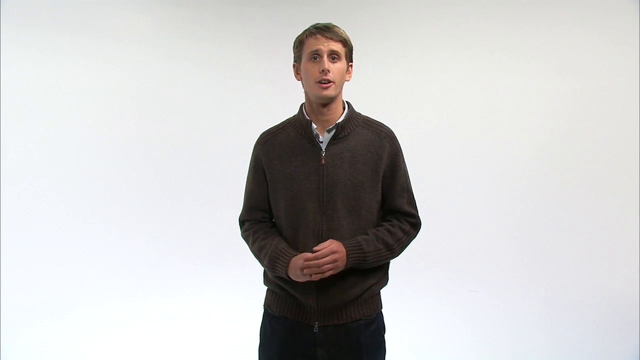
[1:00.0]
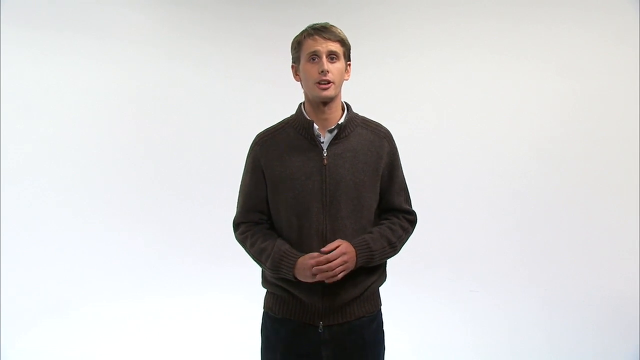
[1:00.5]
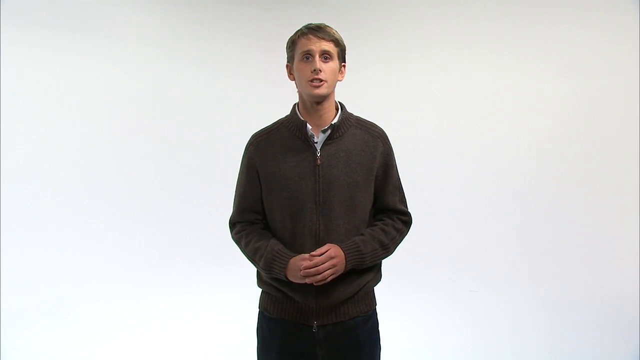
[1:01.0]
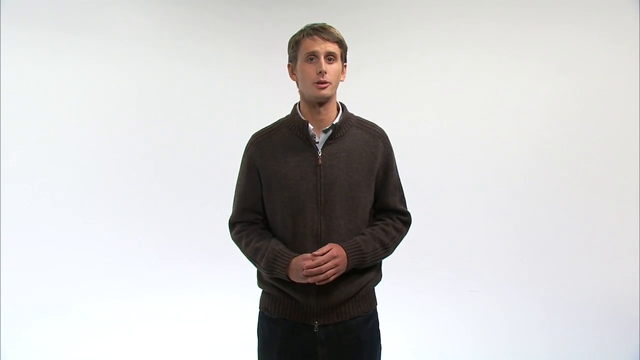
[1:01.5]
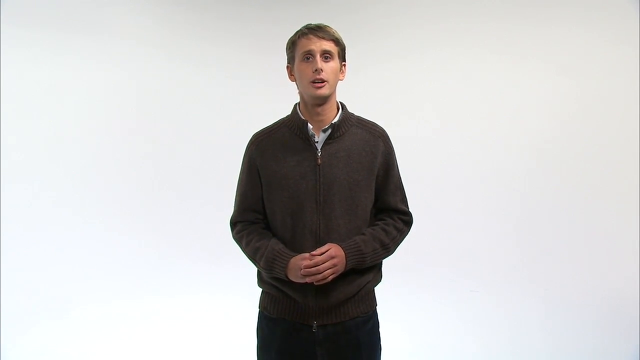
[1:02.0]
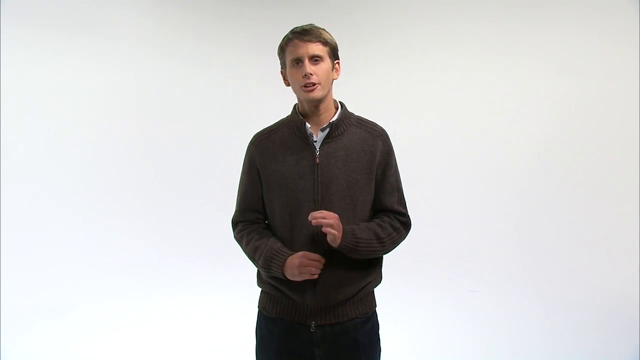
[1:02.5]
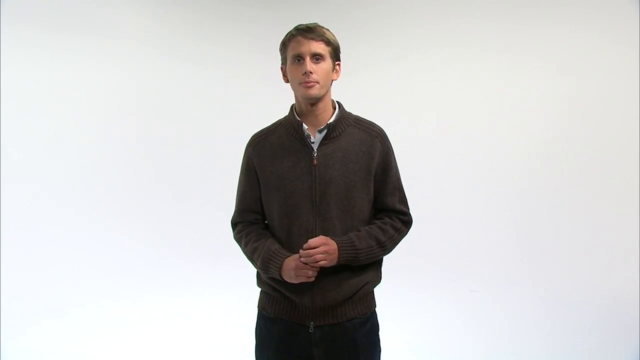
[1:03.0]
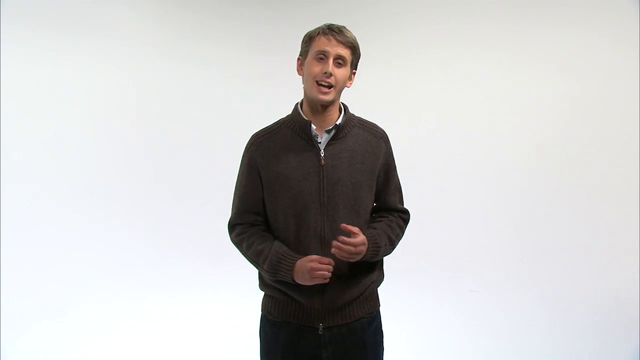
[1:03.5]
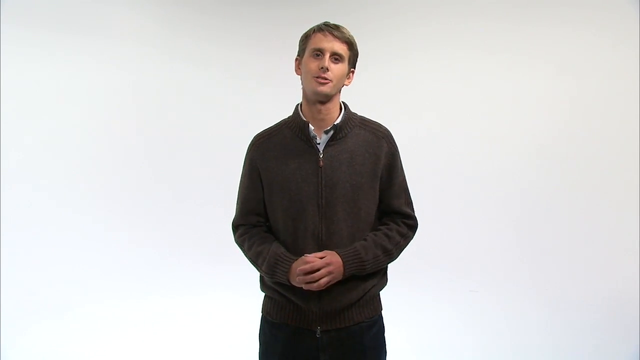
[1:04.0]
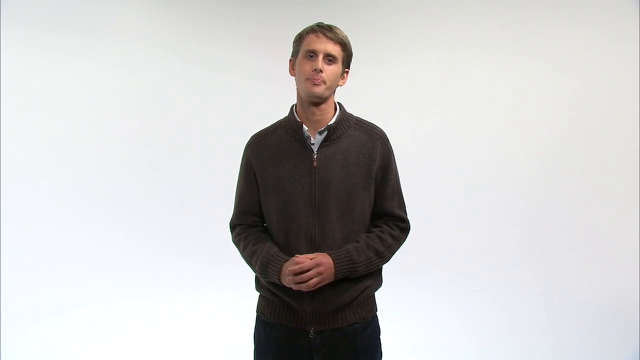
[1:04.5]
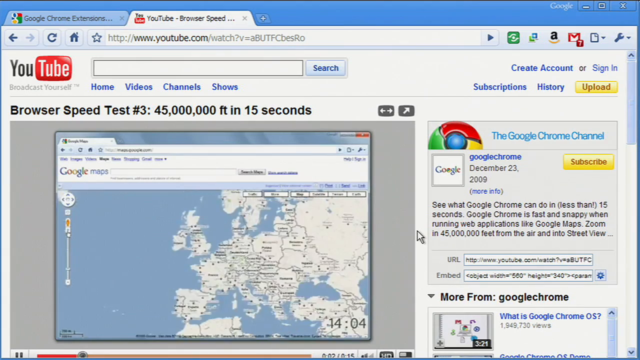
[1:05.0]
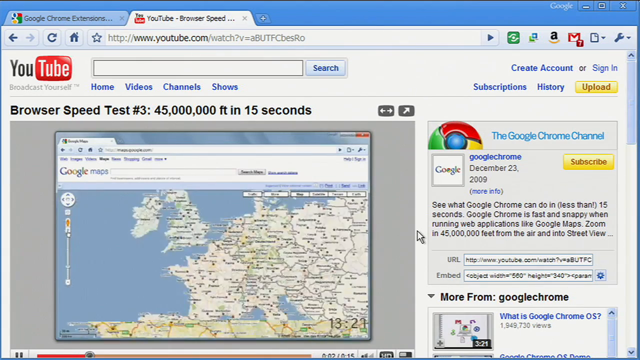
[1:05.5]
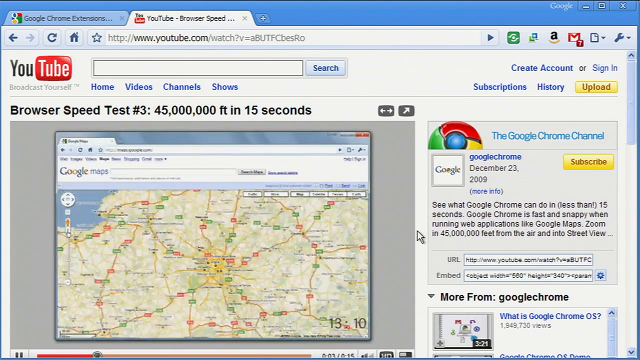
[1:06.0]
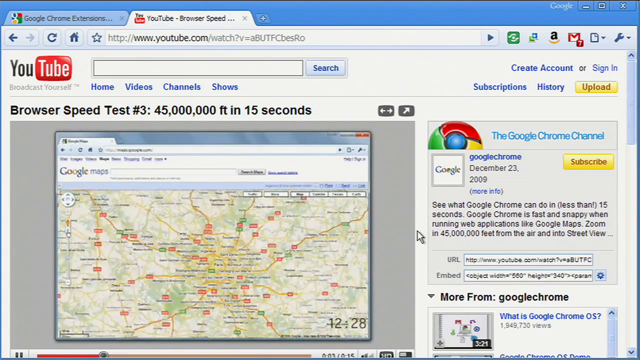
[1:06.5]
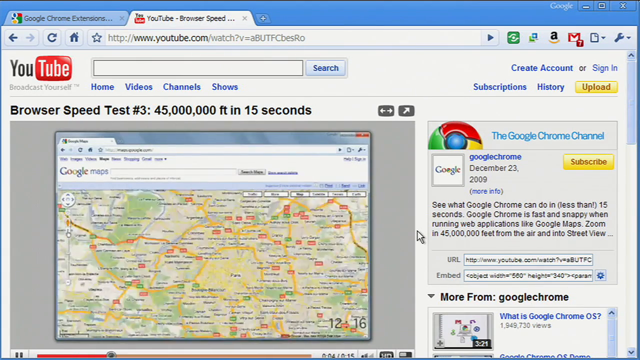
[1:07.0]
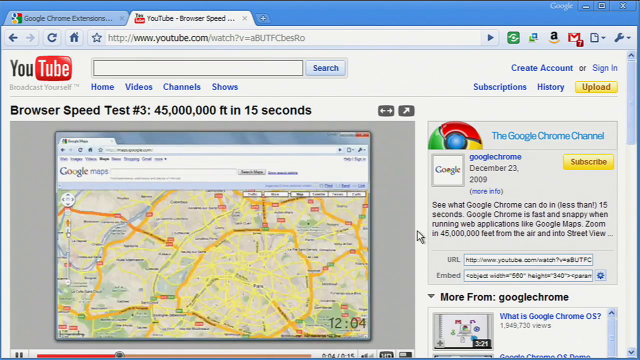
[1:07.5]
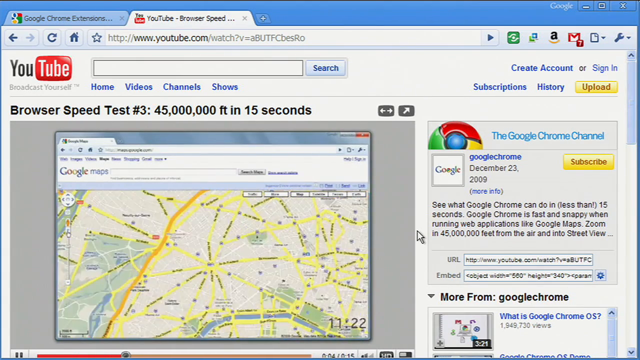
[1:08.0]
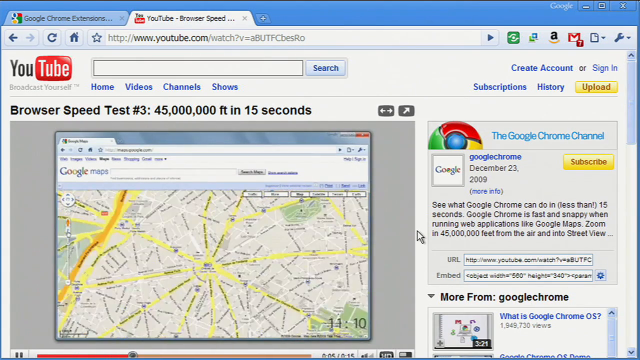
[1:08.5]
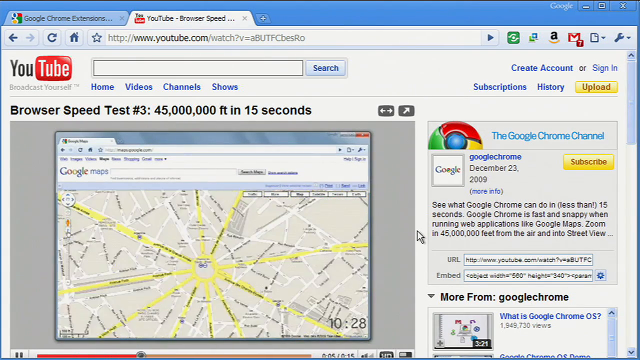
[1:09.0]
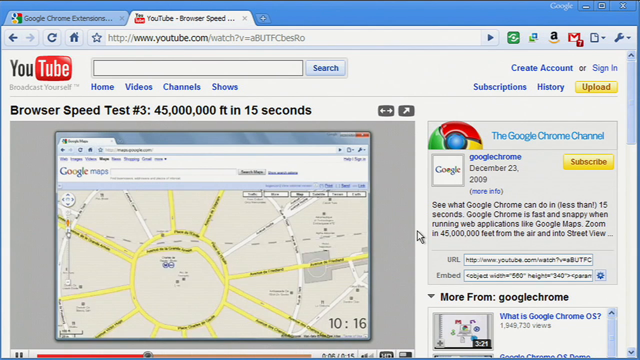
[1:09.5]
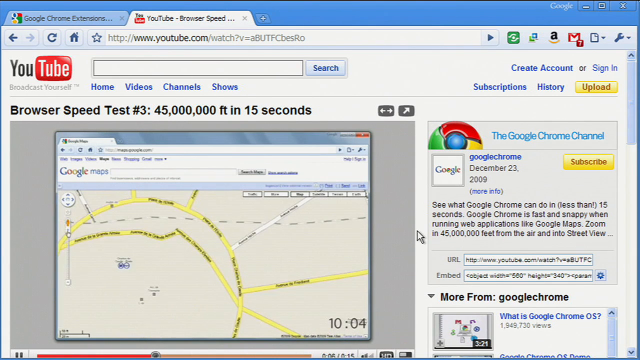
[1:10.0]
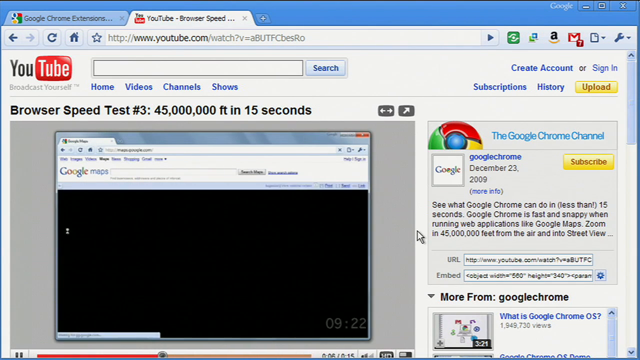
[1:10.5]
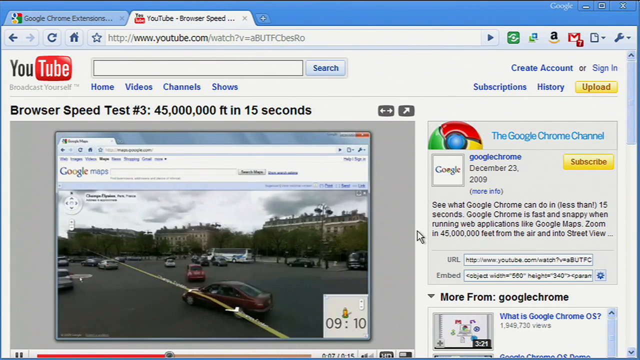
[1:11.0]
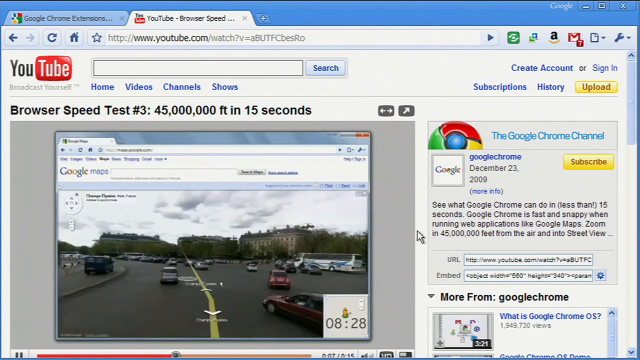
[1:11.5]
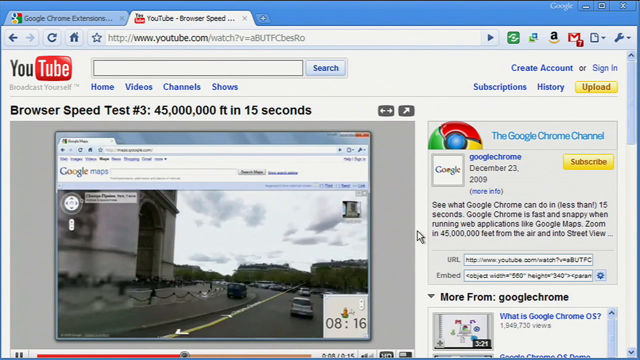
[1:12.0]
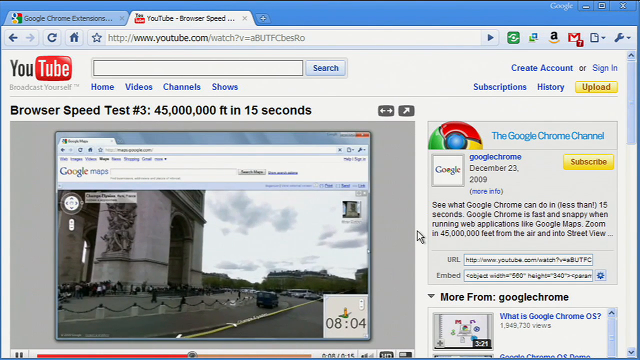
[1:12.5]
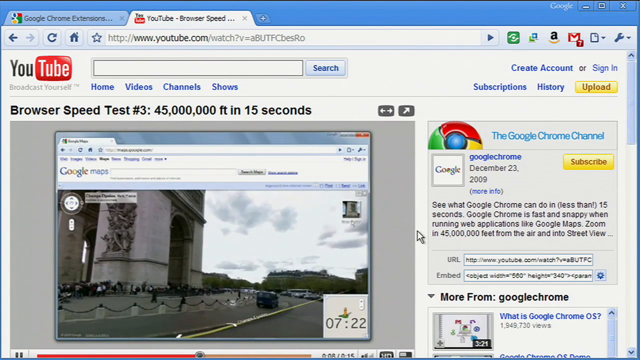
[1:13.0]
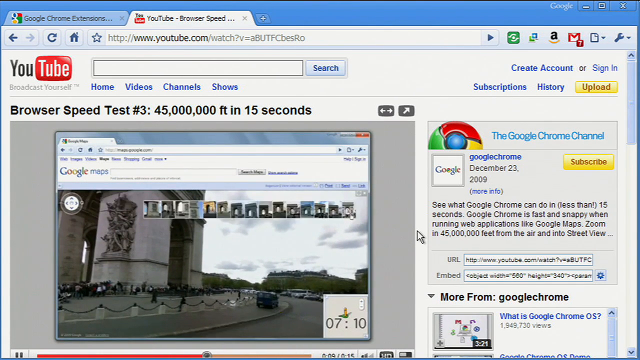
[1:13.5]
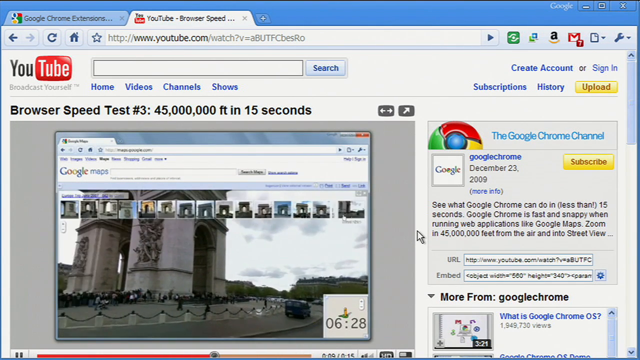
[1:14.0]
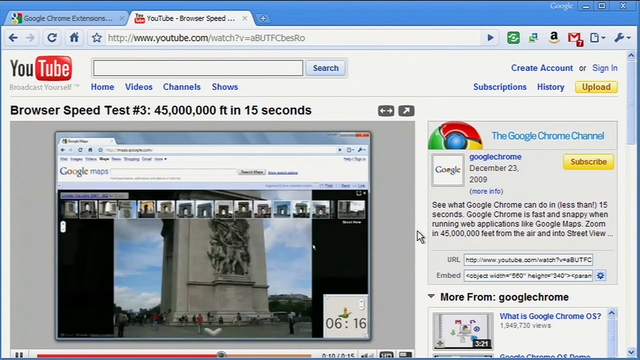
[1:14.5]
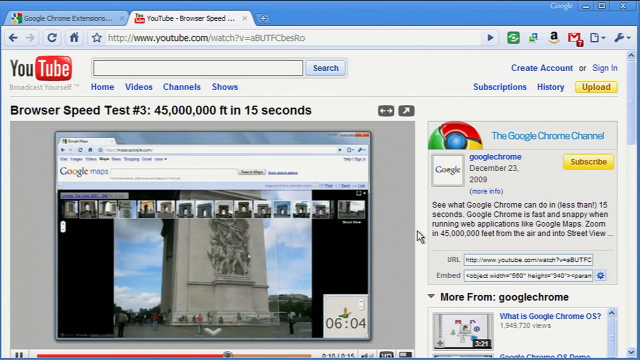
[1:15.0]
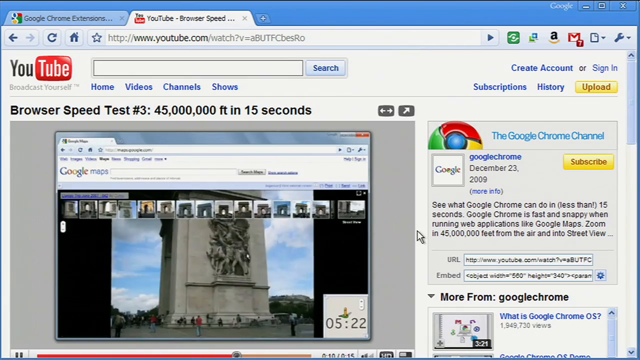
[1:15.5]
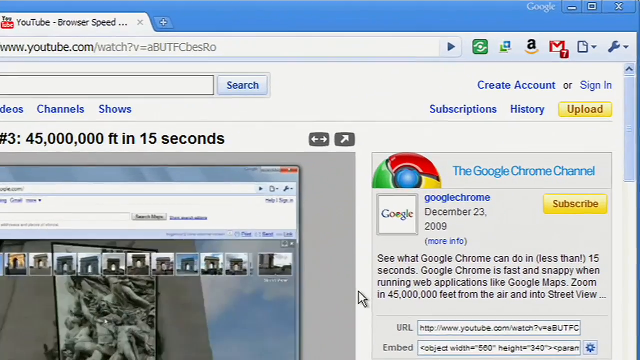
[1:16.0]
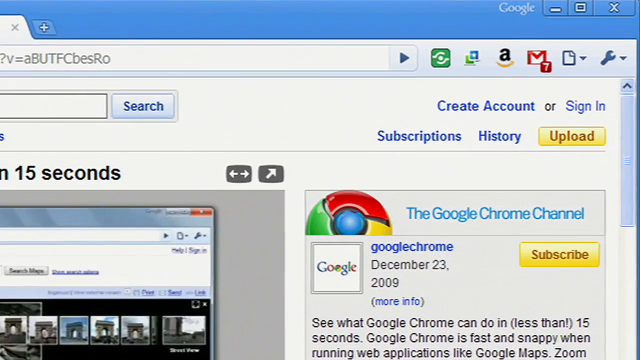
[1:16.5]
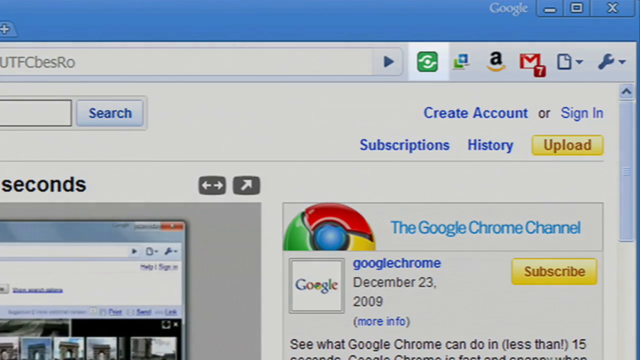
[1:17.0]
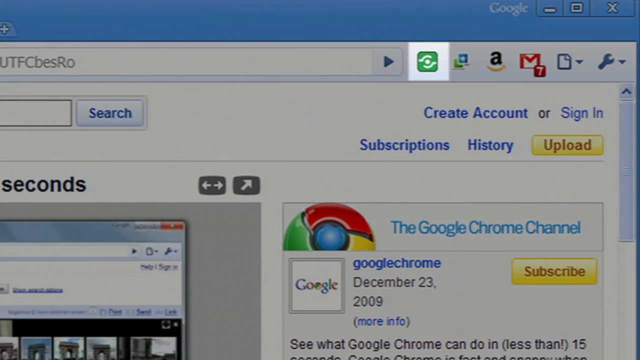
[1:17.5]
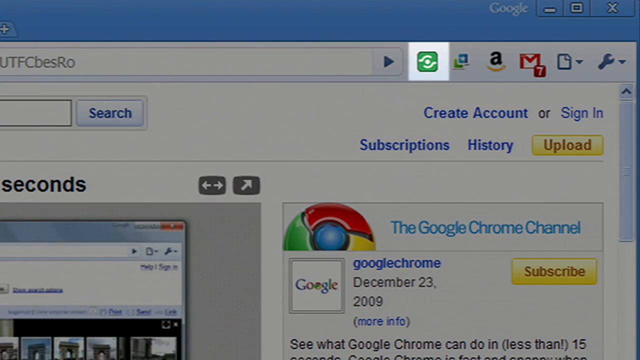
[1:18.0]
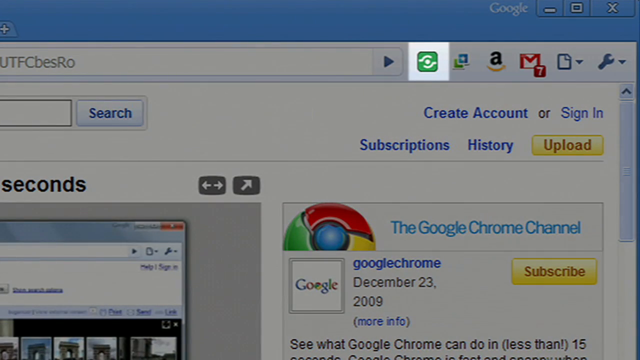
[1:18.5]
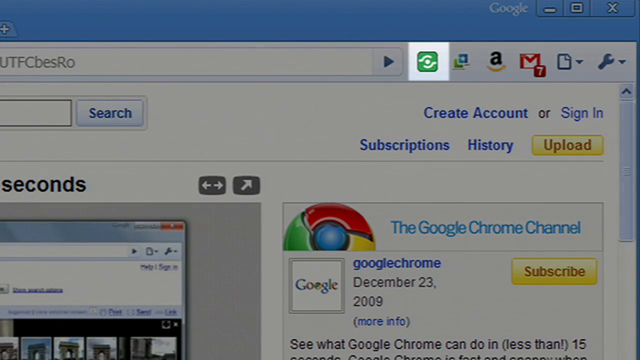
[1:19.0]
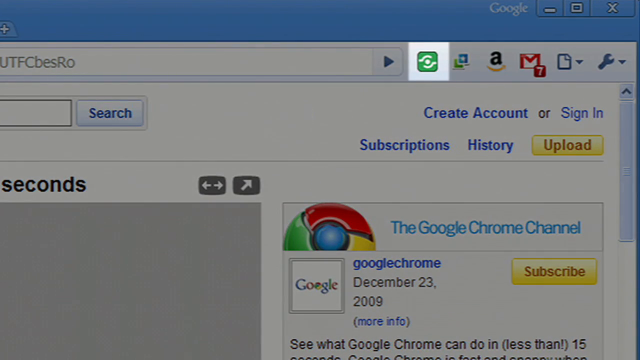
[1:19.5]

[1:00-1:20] A man stands in a room with no background, looking directly at the camera. He wears a sweater, has his right fist in his left hand, and looks very concerned as he talks to the camera. He moves his body a lot and moves his left hand a lot while keeping his right hand in a fist. The scene then changes to a YouTube website showing a video titled "Browser Speed Test Number 3, 45 million feet in 15 seconds", with a website containing a map in the center of the video. On the right side of the screen is the Google Chrome channel with the text "Google Chrome December 23, 2009" and a subscribe button to the right. On the screen the map changes, zooming in so far that it becomes a real-world image that looks like it is from Google satellites. A timeline with different scenery appears at the top, and the image shows some kind of giant pillar with an artistic decoration on the front. The video then zooms in to the upper right corner of the site, showing one of the extensions installed on the browser: a green icon that looks like some kind of camera. The screen turns black with only that icon highlighted, then returns to the normal view.